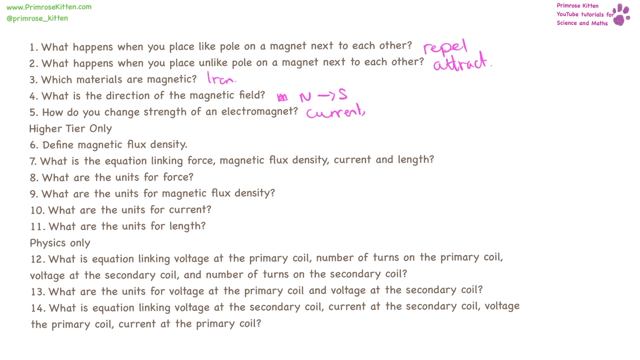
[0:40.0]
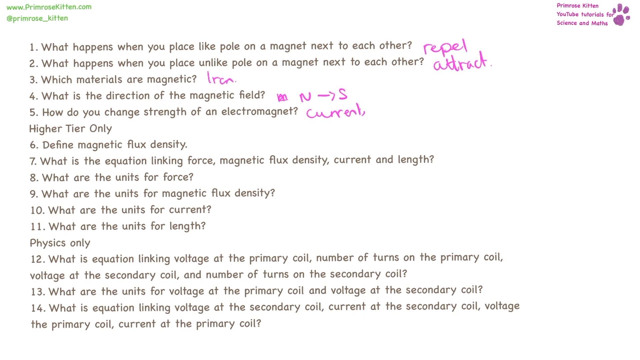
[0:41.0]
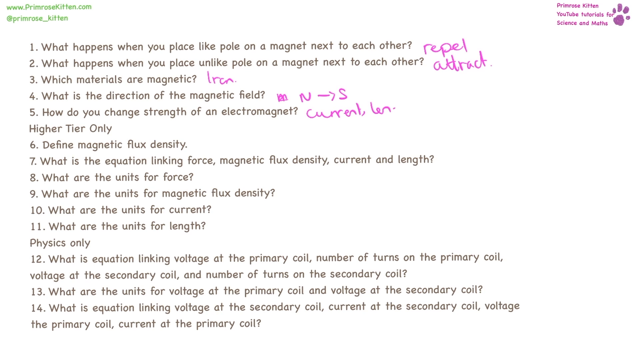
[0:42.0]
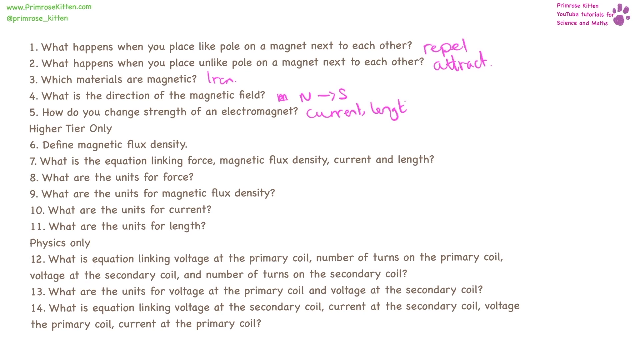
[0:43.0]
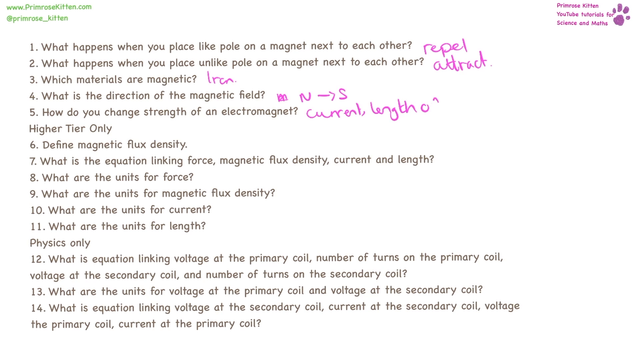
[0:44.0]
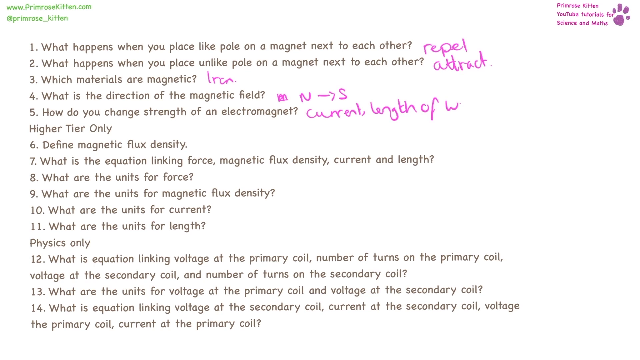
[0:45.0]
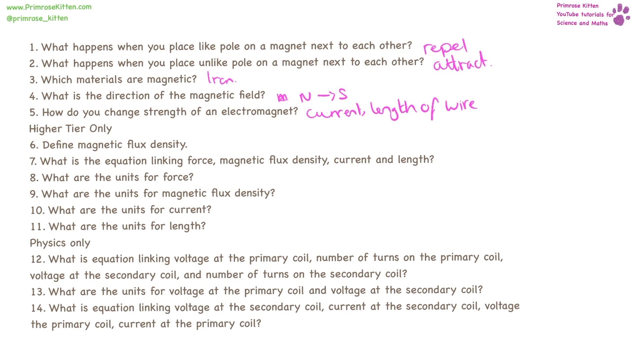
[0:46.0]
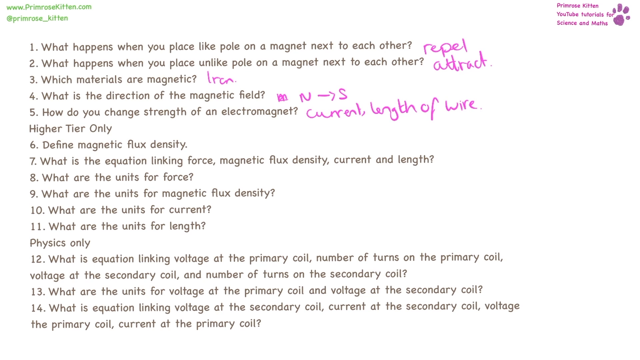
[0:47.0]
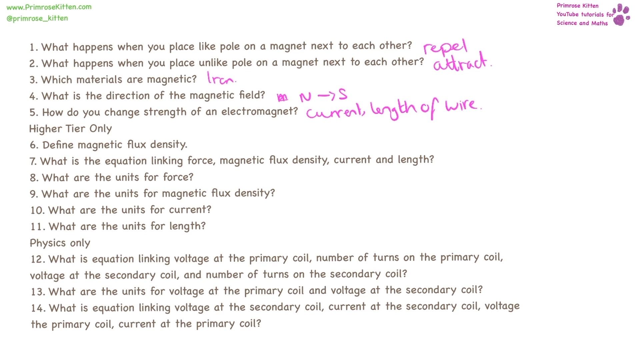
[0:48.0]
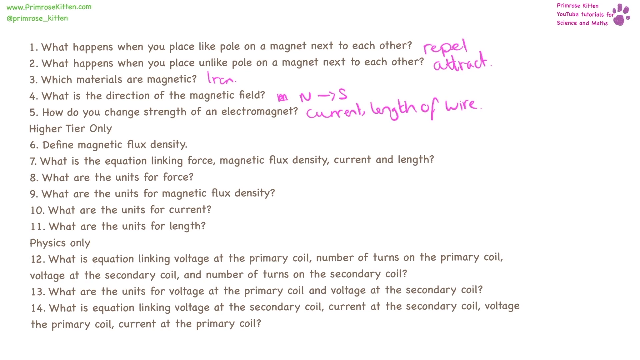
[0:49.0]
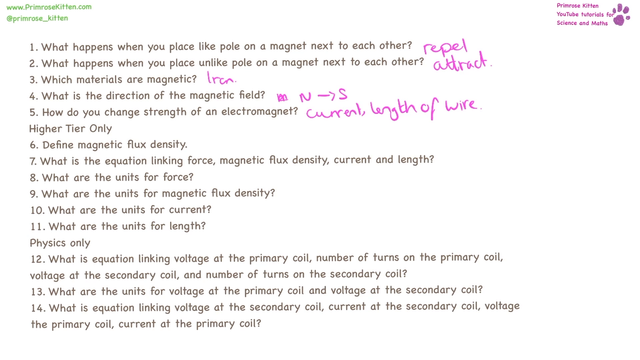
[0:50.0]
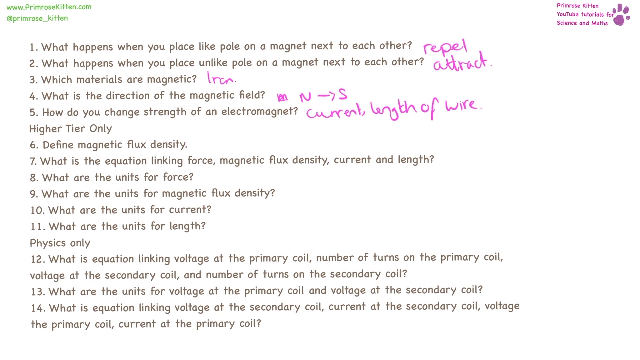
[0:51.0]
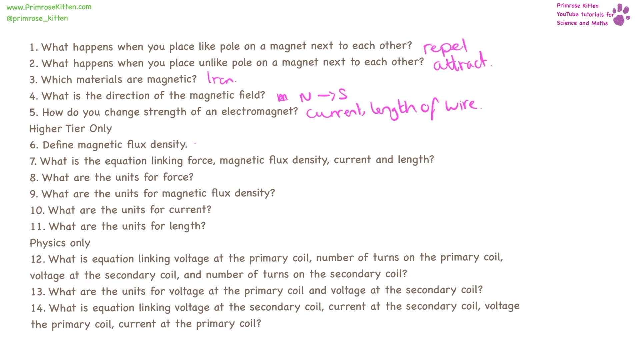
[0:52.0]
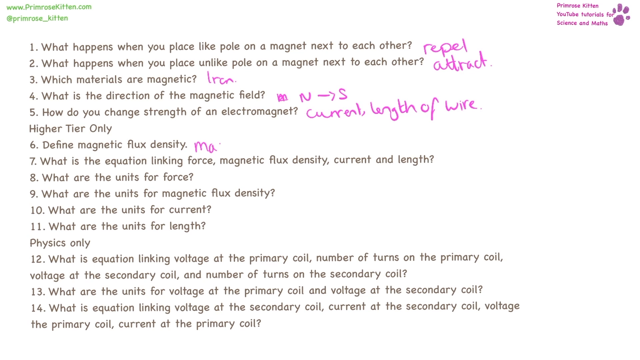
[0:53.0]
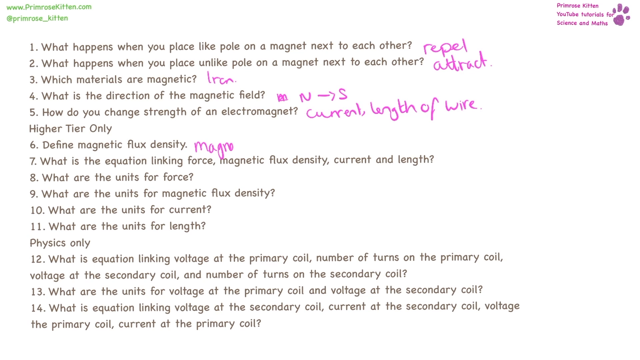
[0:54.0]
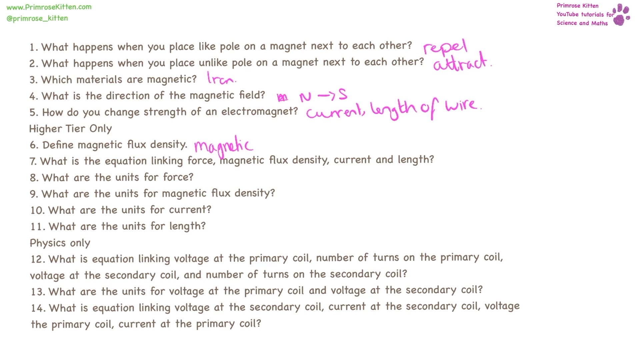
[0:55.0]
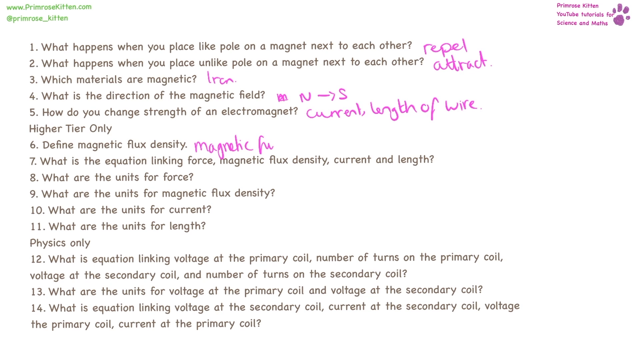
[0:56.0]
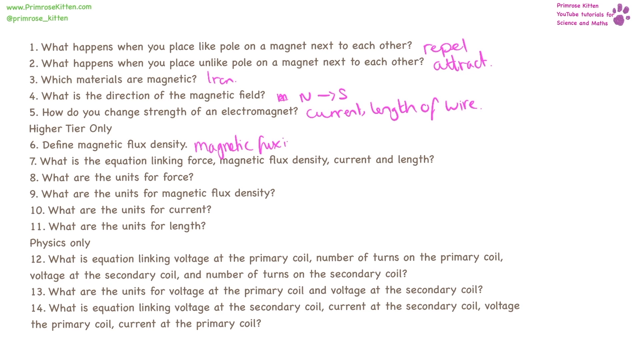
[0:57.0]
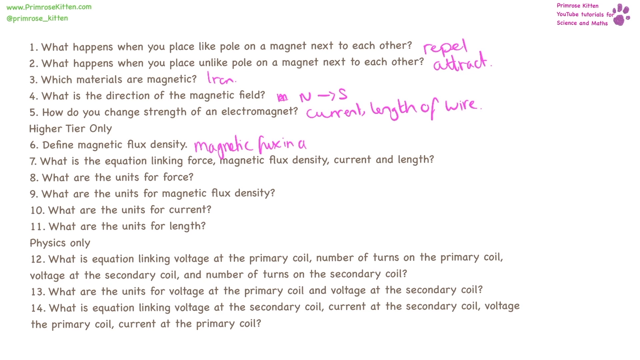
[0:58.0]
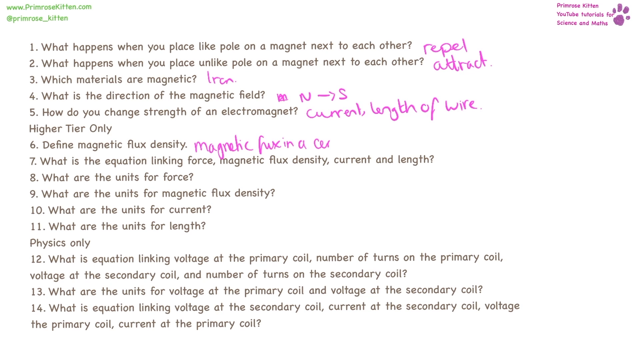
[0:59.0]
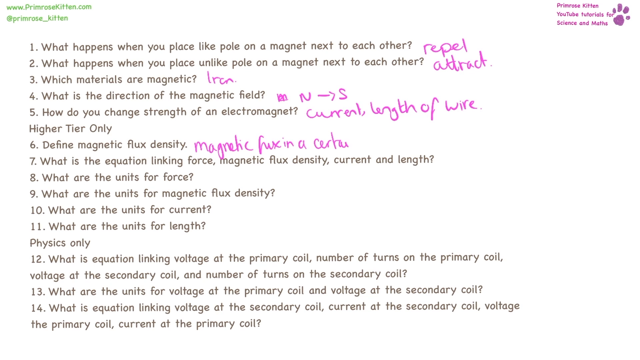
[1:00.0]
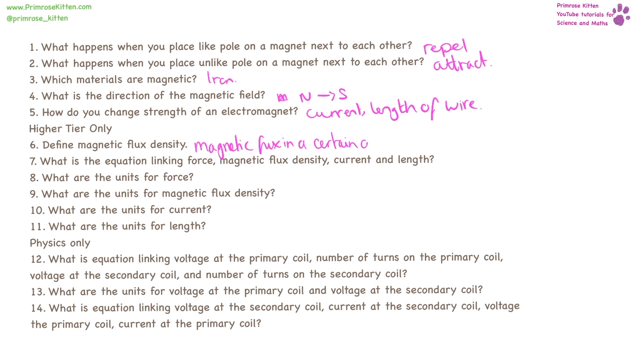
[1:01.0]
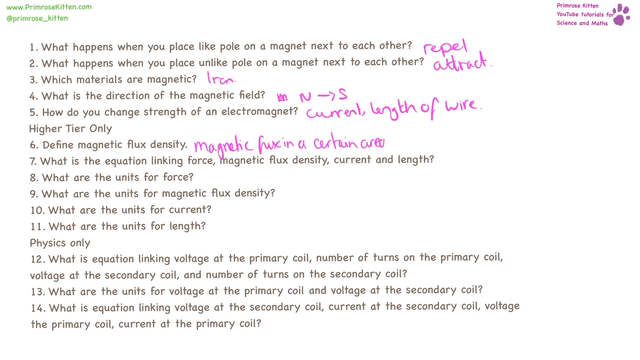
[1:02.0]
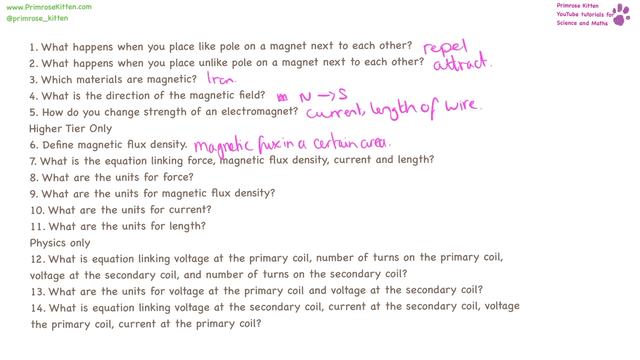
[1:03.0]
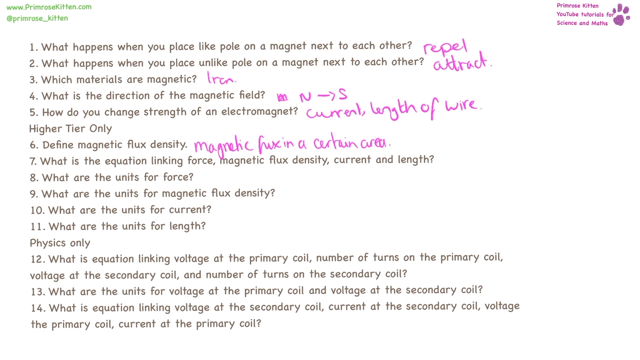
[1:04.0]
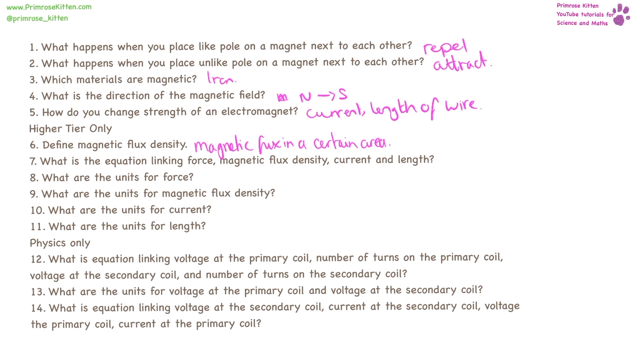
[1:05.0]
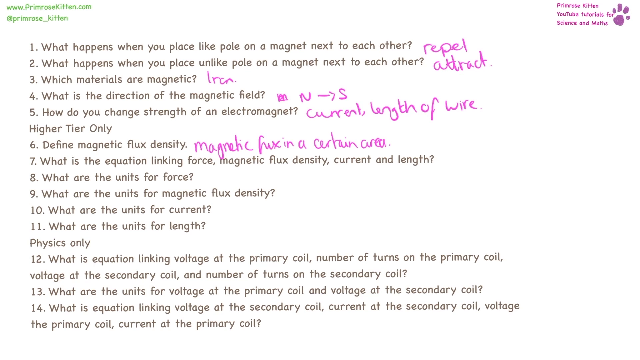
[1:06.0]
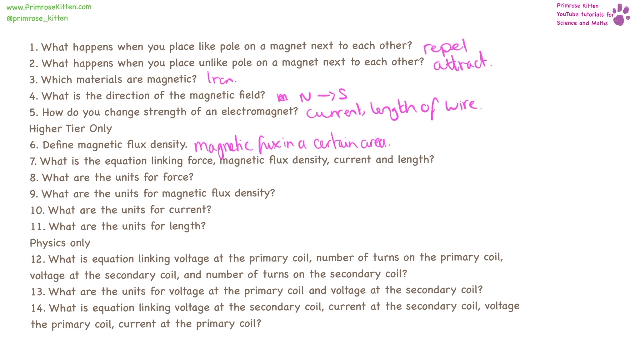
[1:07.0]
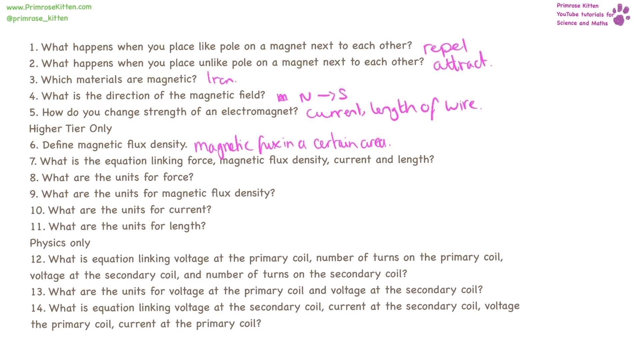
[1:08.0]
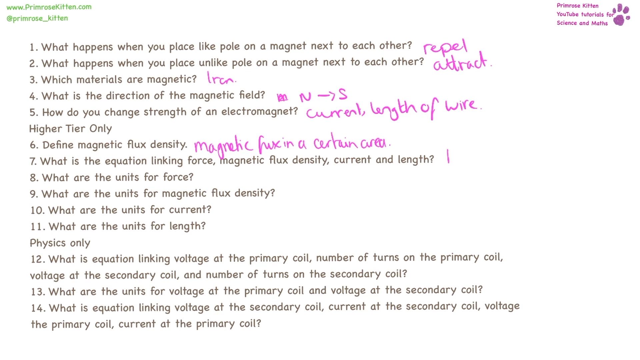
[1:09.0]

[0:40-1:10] About 14 one-line questions about magnets are typed on a white background. The top left shows Primrose Kitten's website name and Instagram handle in light green on two lines, and the logo is in the top right. Answers are written in thin red pen strokes at the end of each question; the first four are already answered. "Length of wire" is written as the answer to the fifth question. Next comes a section of six "high tier only" questions, also one line each. The answer to the sixth question, "define magnetic flux density?", is written, ending with "in a certain area." Writing then begins on the seventh answer with an "F" just as the shot cuts.